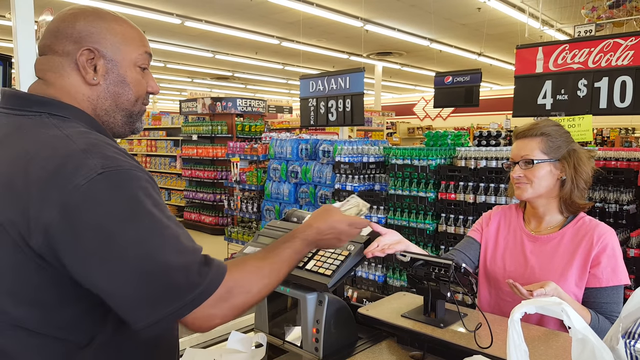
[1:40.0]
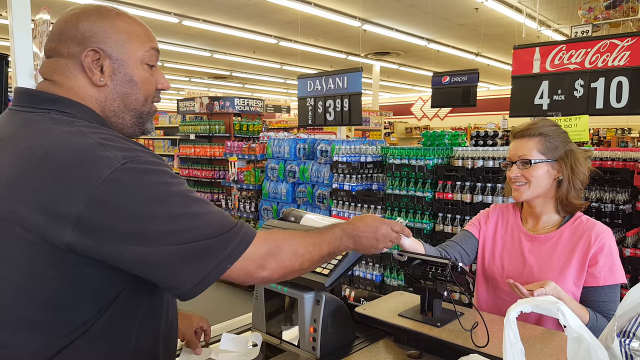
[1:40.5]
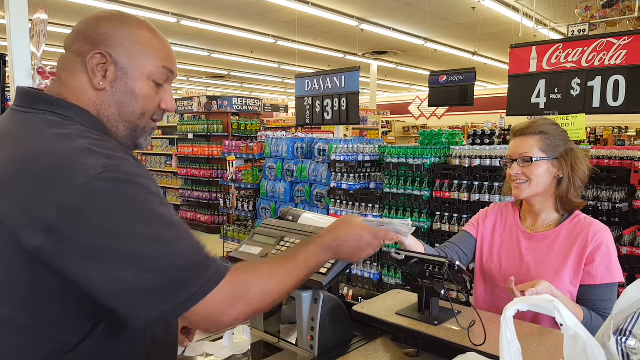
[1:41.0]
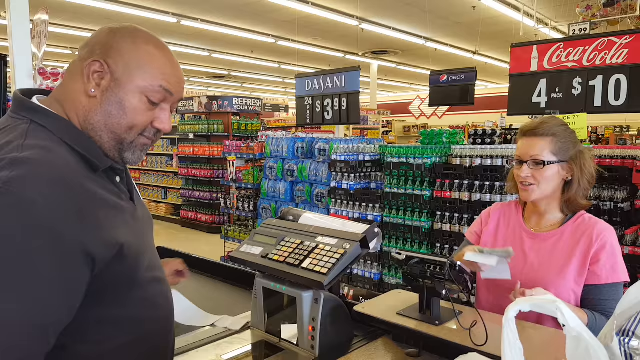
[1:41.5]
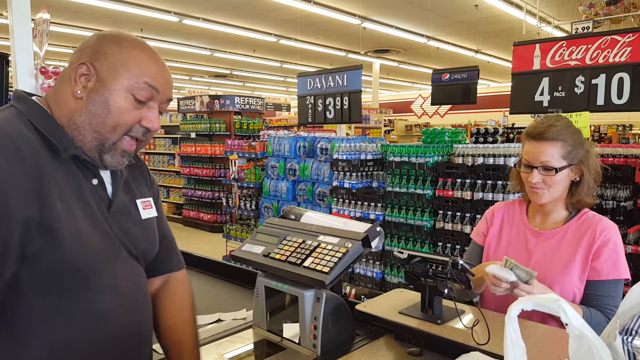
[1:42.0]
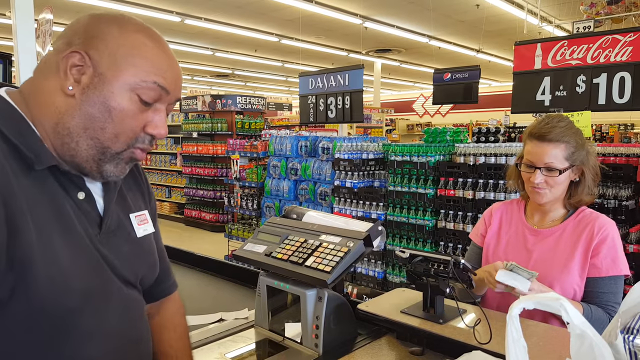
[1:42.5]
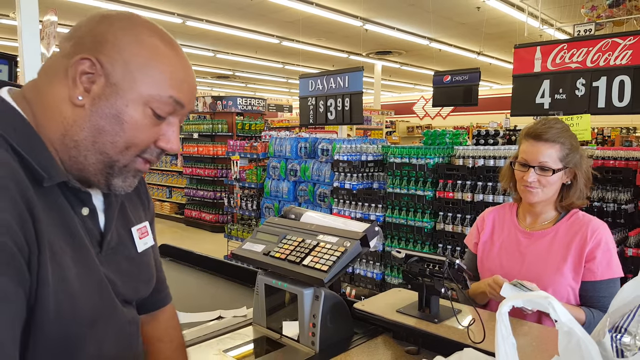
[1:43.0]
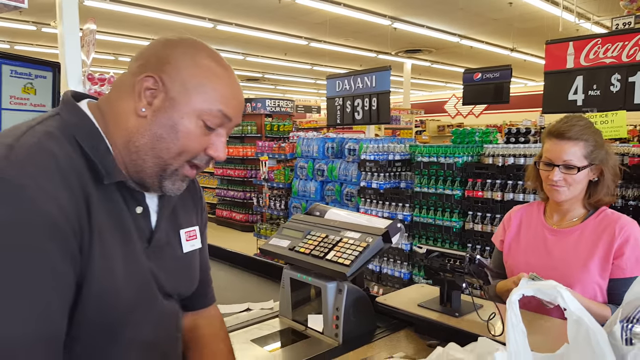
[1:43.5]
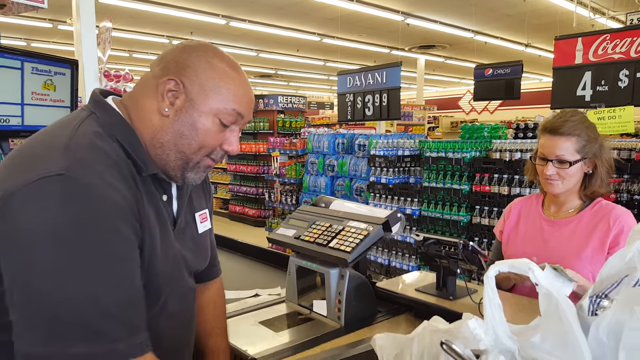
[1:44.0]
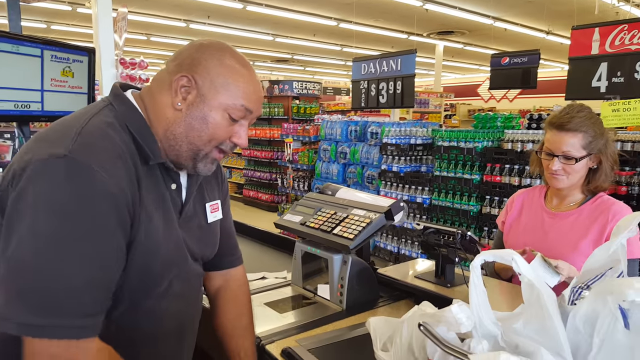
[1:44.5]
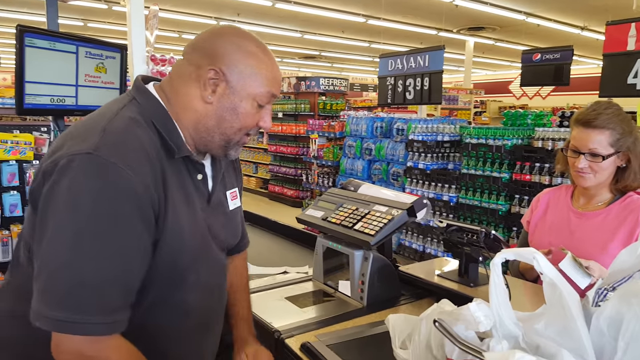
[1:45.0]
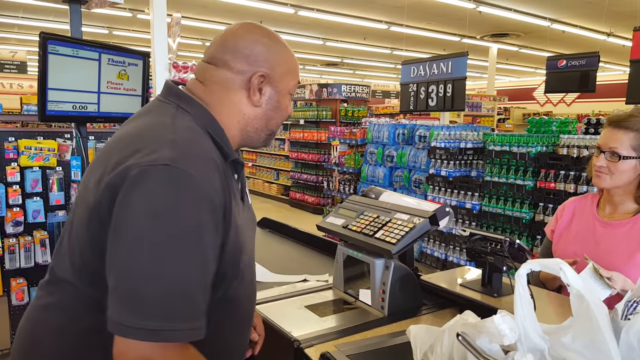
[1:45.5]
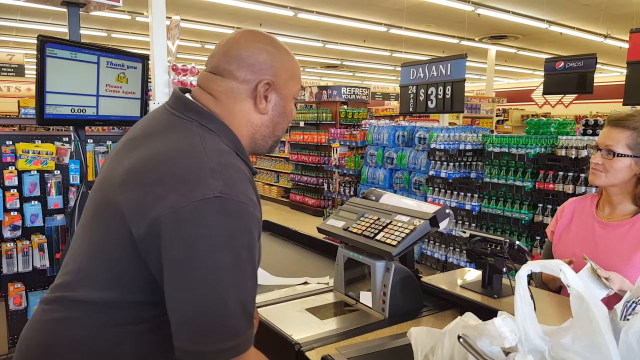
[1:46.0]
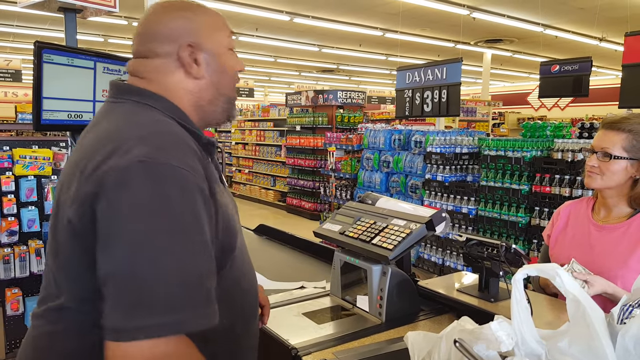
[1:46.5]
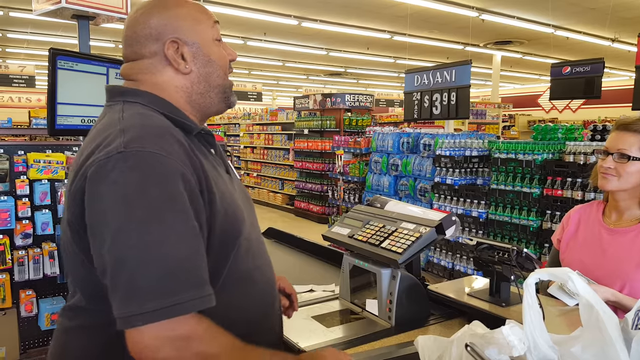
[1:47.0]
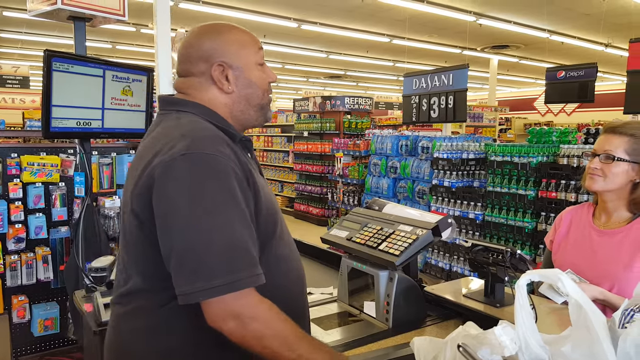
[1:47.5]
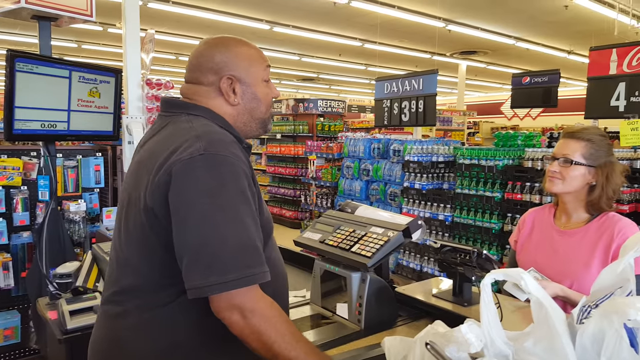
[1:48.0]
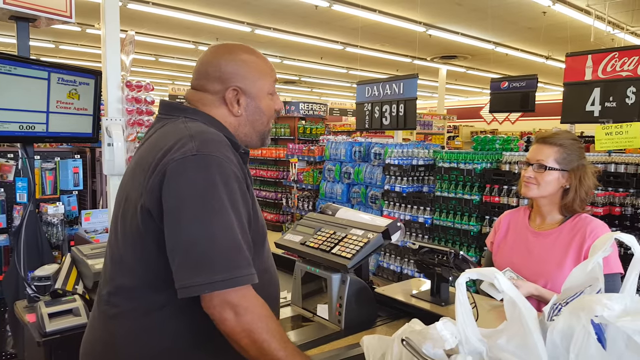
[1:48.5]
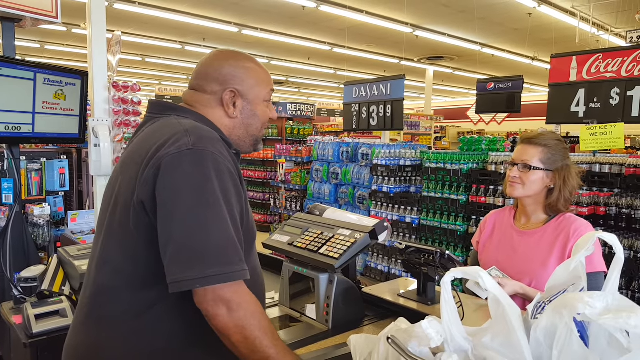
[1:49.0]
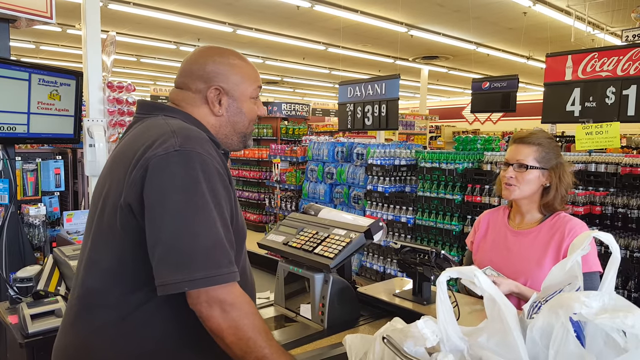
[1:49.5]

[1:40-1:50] The man hands the receipt and cash to the woman, with the receipt on the bottom and the bills on top. He looks down and finally closes his register door with his right hand. Her groceries are all bagged up on the right side. He talks to the woman, and she talks back to him.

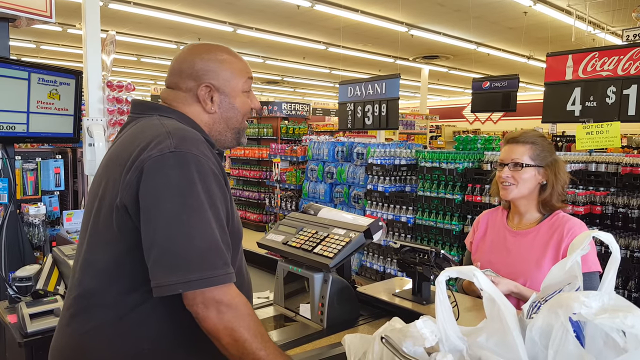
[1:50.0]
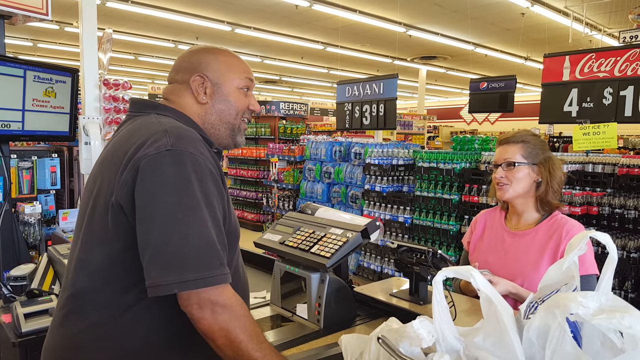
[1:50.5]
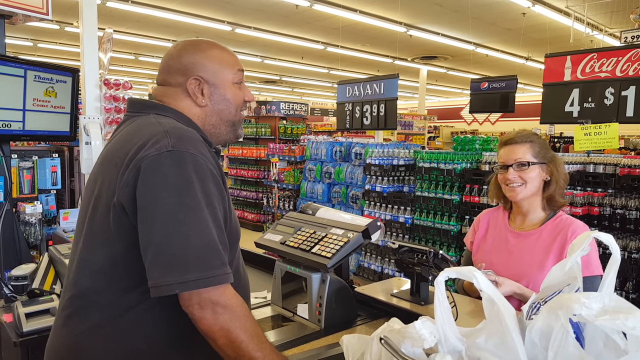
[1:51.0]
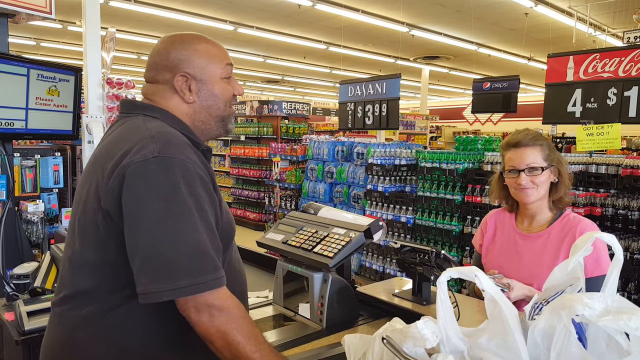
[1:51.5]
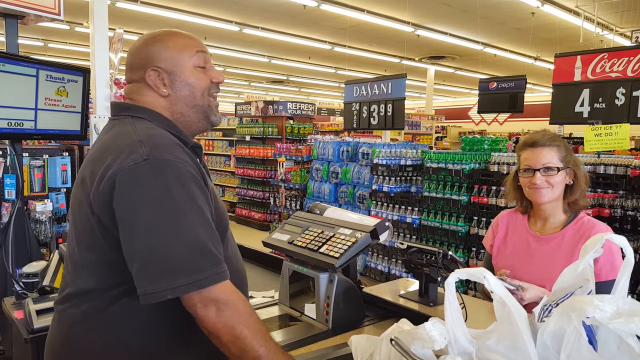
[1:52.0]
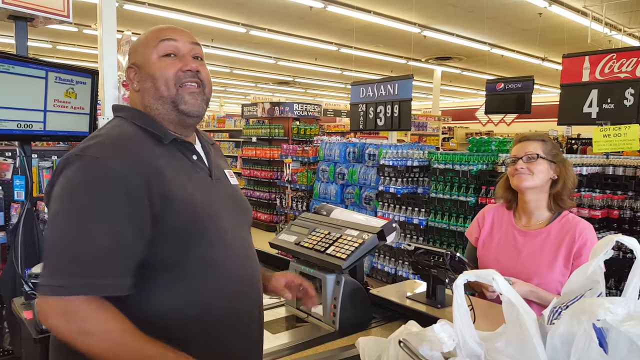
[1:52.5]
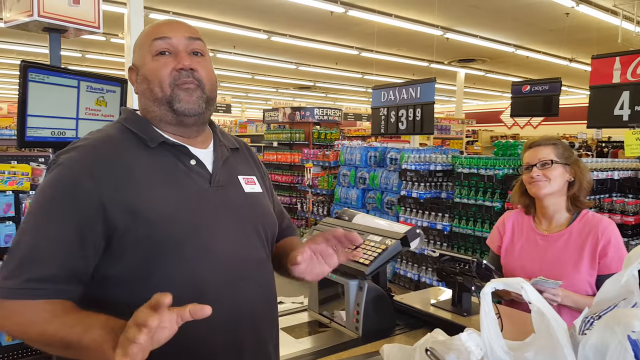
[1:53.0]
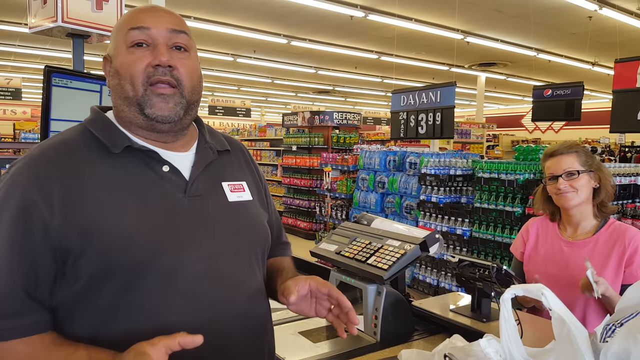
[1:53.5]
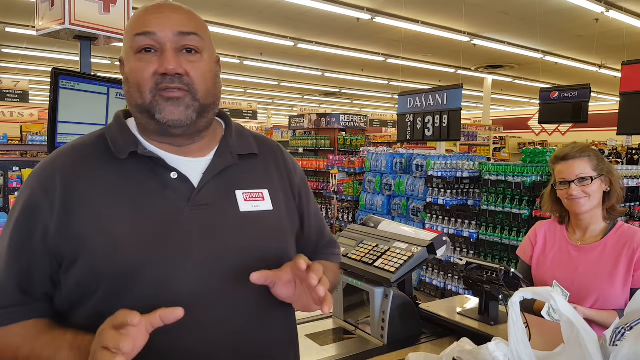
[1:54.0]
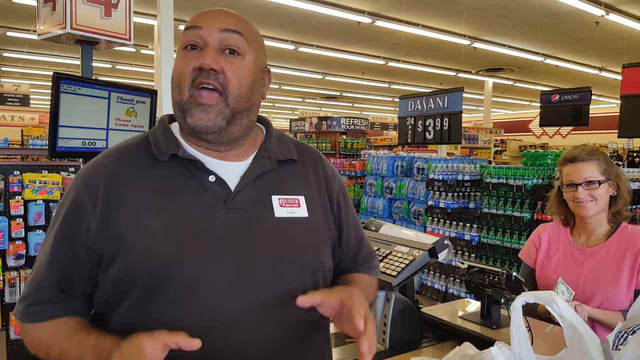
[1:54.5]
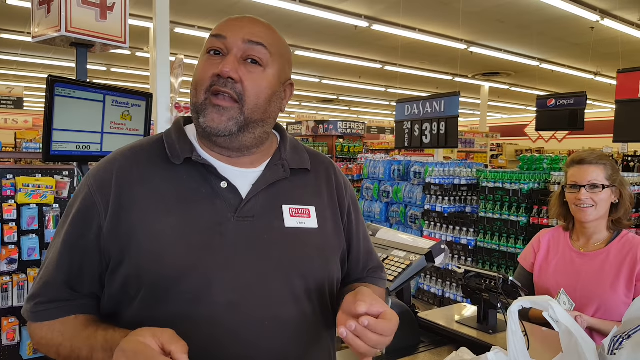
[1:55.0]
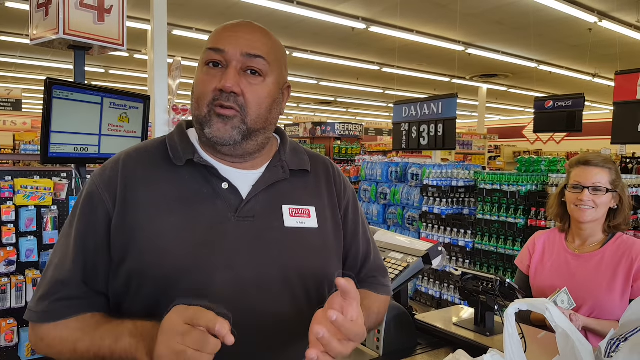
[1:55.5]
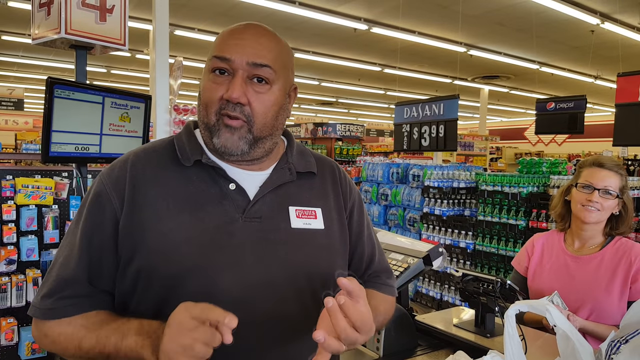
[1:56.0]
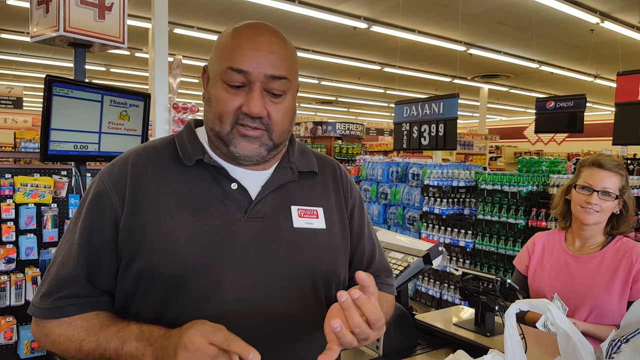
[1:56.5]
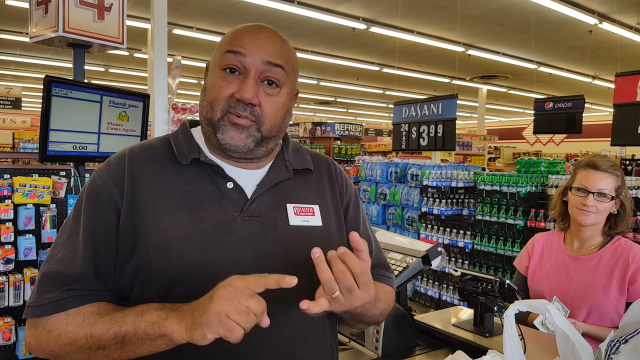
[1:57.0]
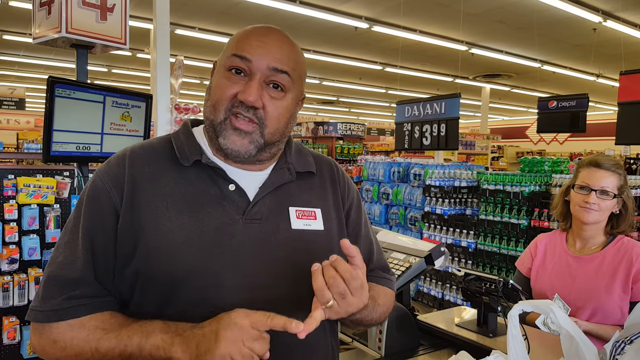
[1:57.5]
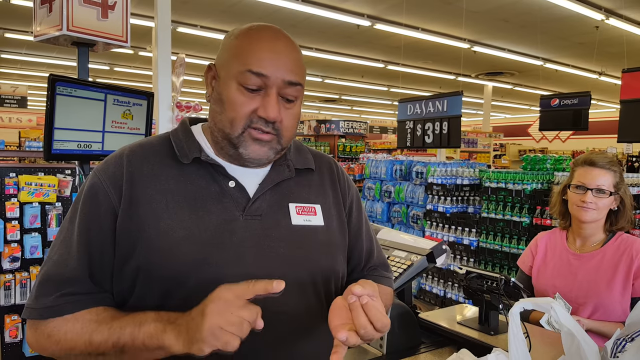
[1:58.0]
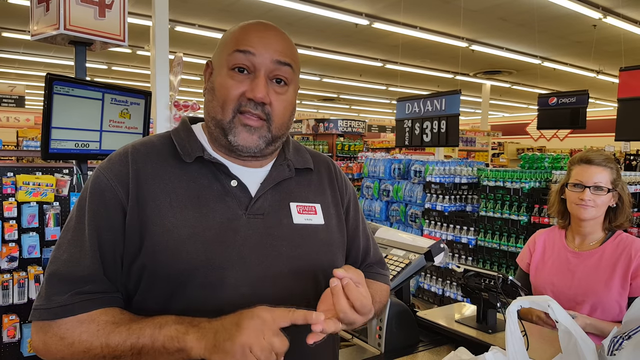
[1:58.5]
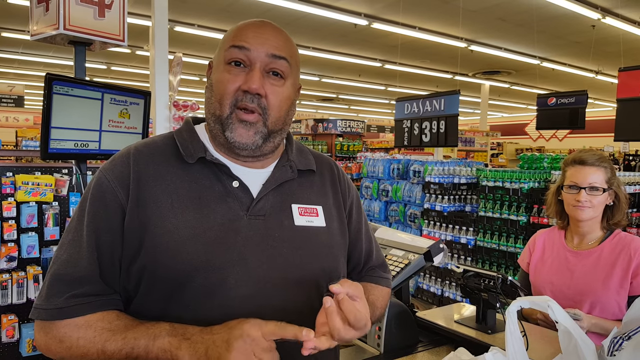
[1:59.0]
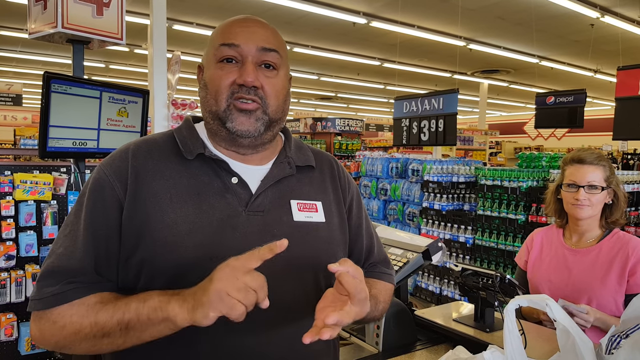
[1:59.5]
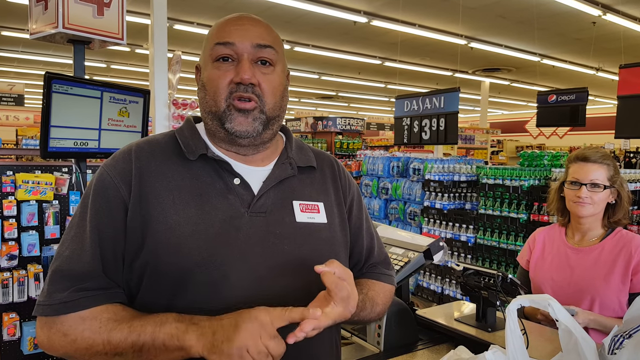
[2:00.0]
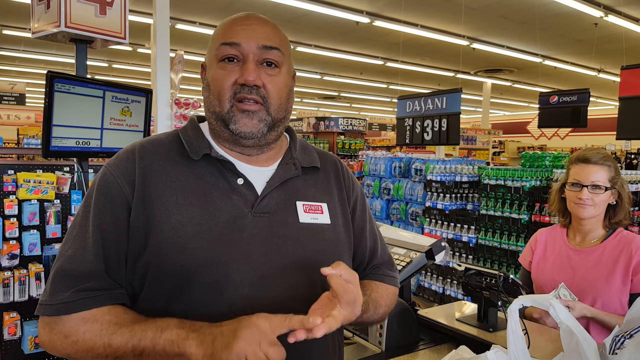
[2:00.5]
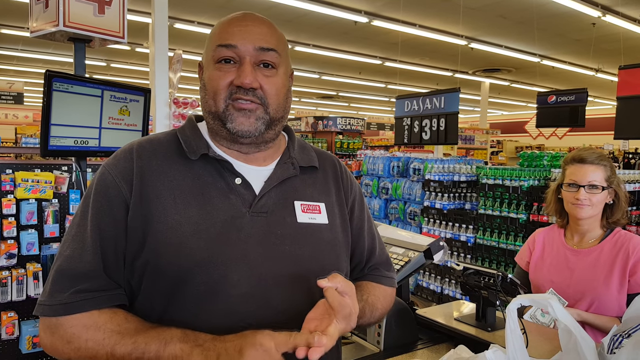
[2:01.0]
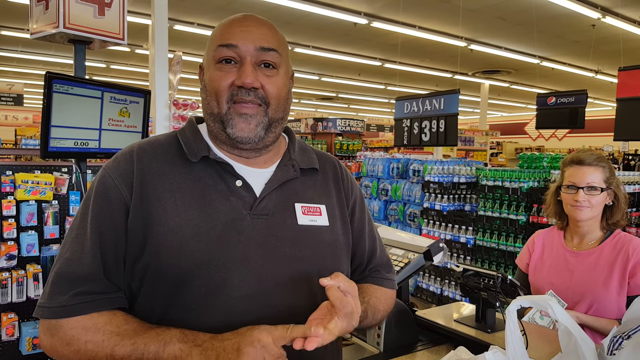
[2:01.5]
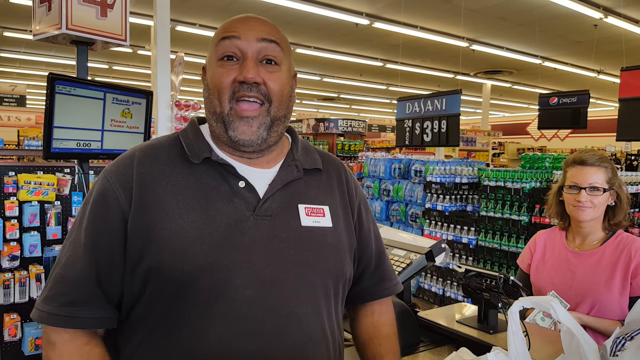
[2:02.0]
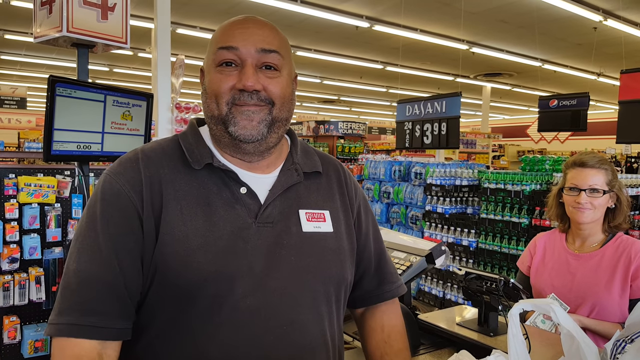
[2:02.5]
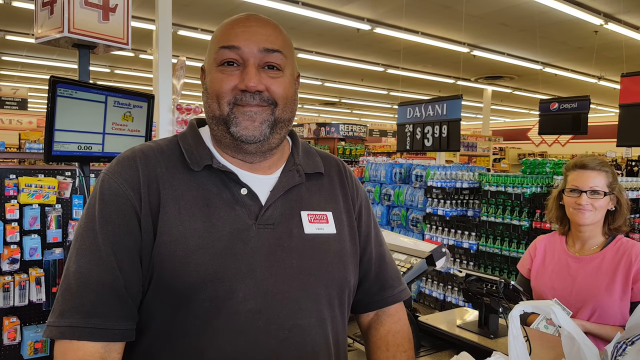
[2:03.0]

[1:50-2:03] The man keeps talking while the woman looks at the camera and smiles. The man then looks over at the camera and starts talking directly to it; the customer, on the right side, is also looking at the camera and smiling. He gestures with his hands, using his right hand to point at the fingers of his left hand and counting from his pinky to his ring finger to his middle finger, kind of like a checklist. He lists about three different things on his fingers, perhaps steps to take. This is a tutorial video on how to be a cashier at this specific grocery store.